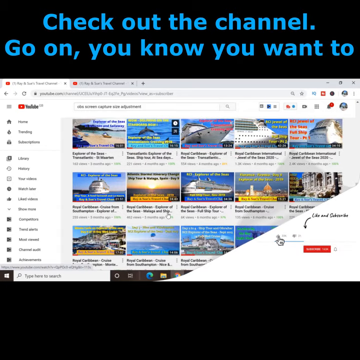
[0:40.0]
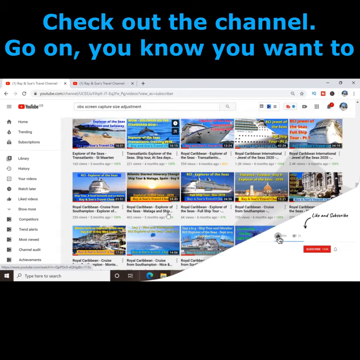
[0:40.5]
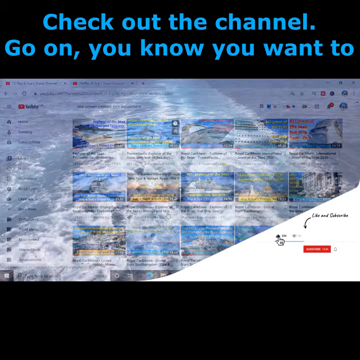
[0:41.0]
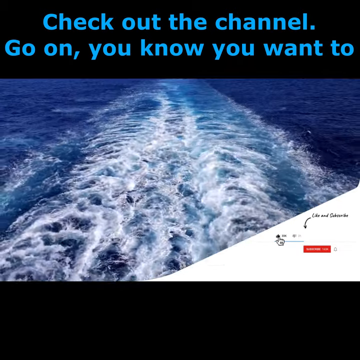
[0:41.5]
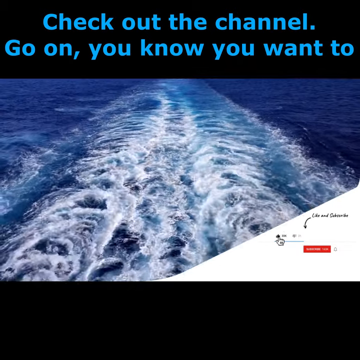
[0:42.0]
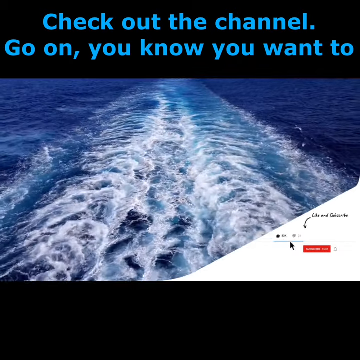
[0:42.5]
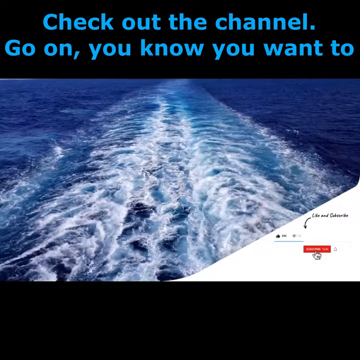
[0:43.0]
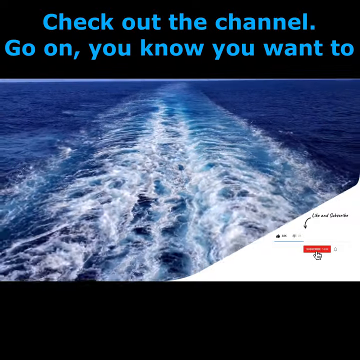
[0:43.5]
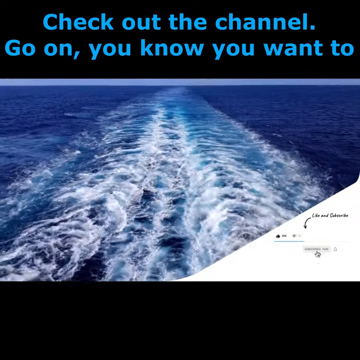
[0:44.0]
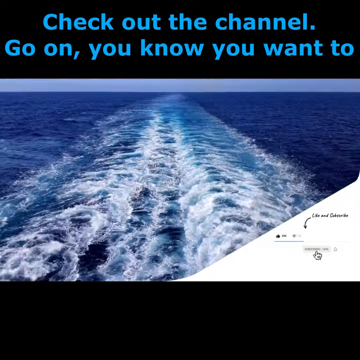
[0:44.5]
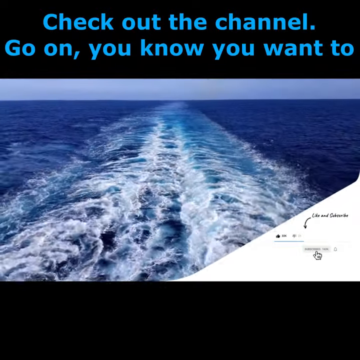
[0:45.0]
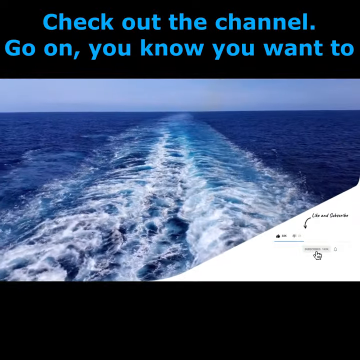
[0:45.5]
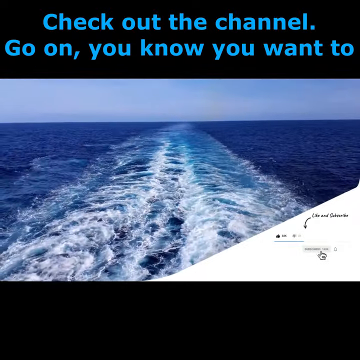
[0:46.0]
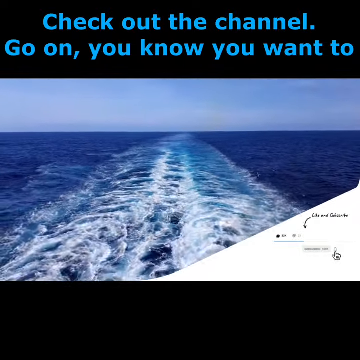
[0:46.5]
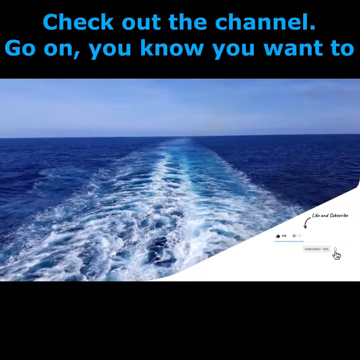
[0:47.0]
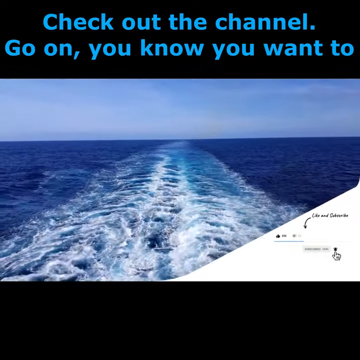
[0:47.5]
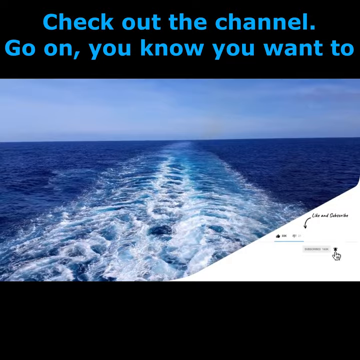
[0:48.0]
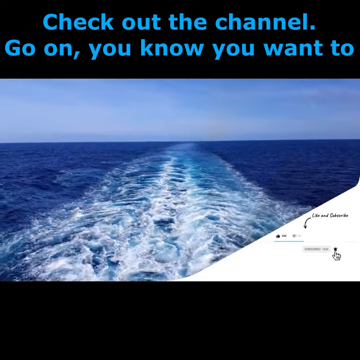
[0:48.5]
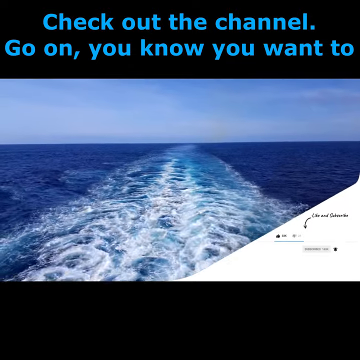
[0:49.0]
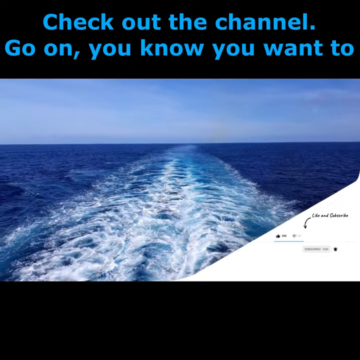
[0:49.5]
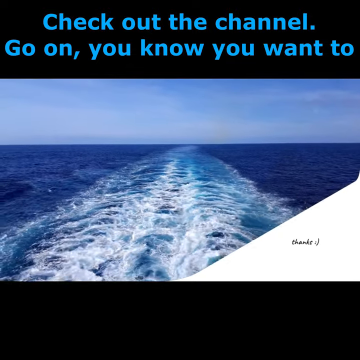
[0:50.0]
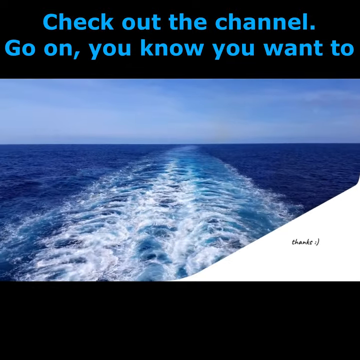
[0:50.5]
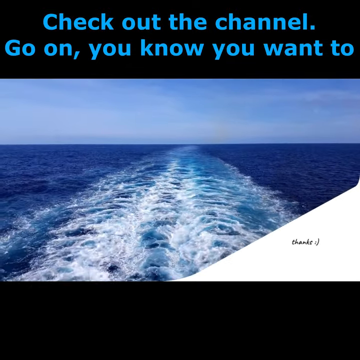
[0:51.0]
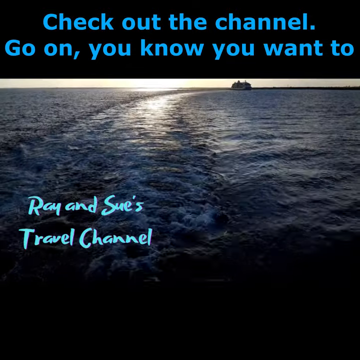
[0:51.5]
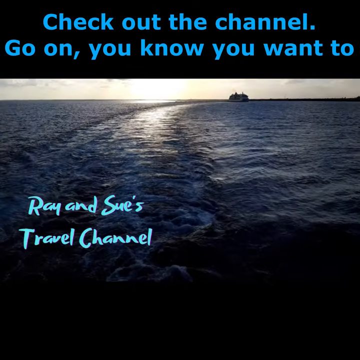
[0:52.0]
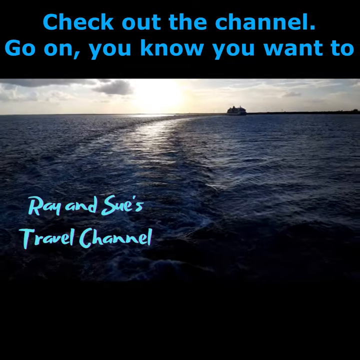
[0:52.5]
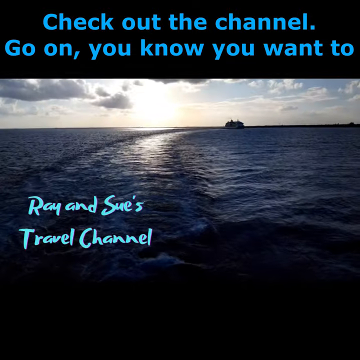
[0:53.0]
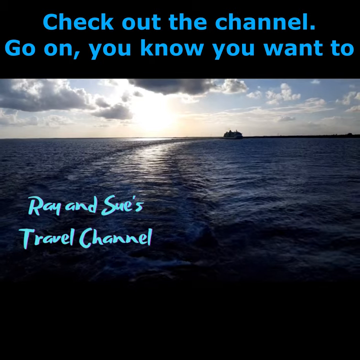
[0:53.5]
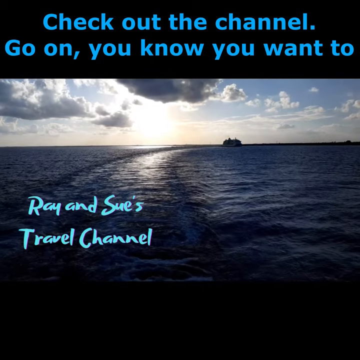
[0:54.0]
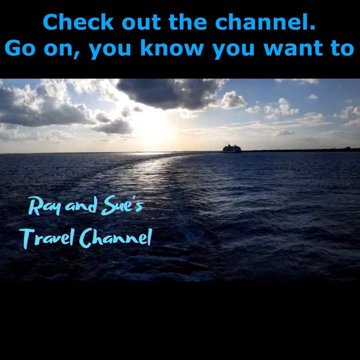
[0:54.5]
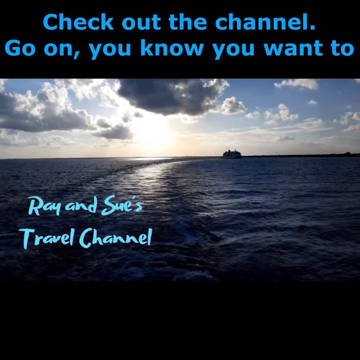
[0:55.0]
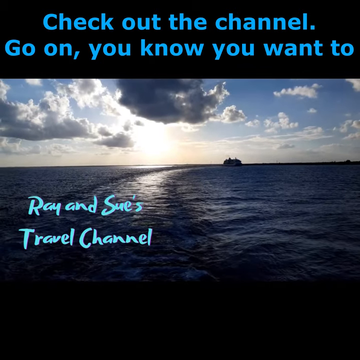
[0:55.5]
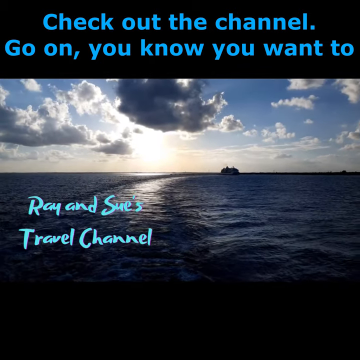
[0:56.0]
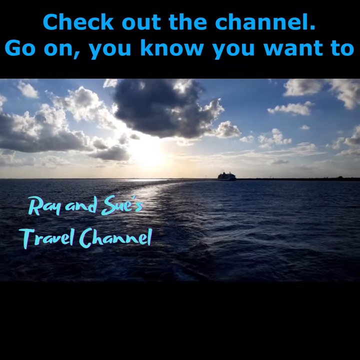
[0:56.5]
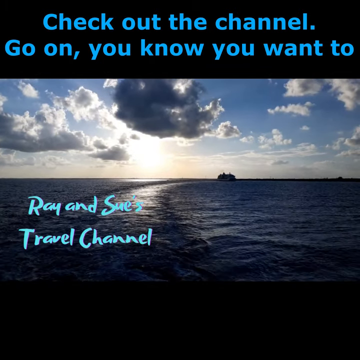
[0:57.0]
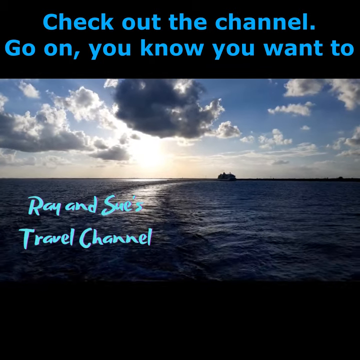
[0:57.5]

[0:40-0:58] Blue text on a black background reads "check out the channel go on you know you want to." A YouTube screen shows a bunch of different videos, with a small white section at the bottom reading "like and subscribe" in black text, and a little red subscribe button. A mouse moves toward the like feature and clicks like. Video footage shows a large body of water with ripples from a boat. The red subscribe button is clicked, and the mouse moves over to click another little icon. Black text pops up reading "thanks" with a smiley face. Footage of the water appears again with blue text reading "Ray and Sue's travel channel," and the sun is kind of setting, with some clouds still in the sky.